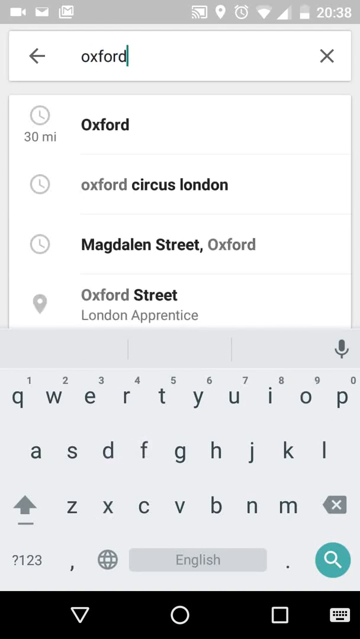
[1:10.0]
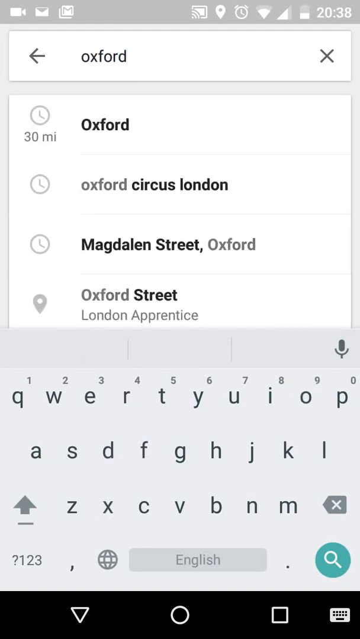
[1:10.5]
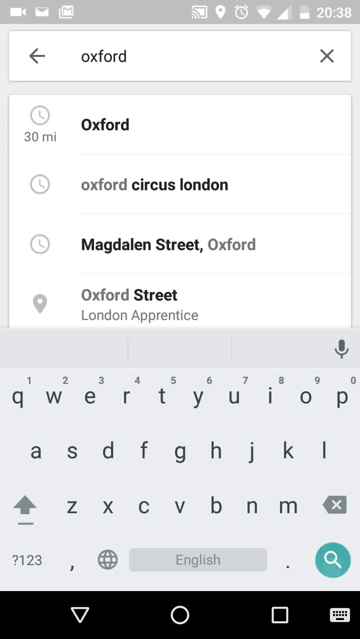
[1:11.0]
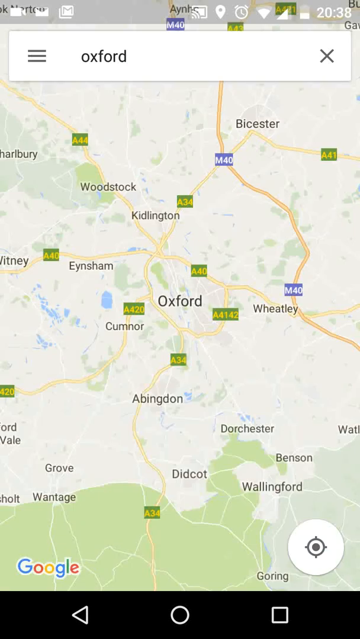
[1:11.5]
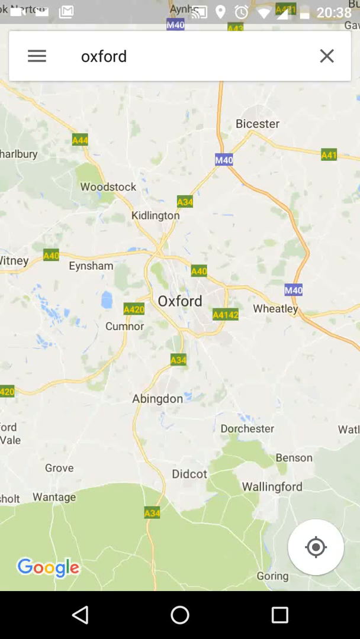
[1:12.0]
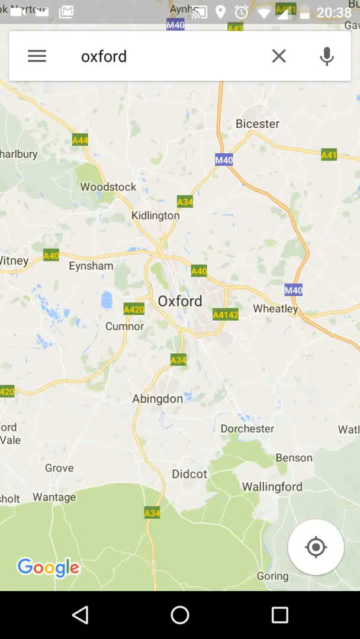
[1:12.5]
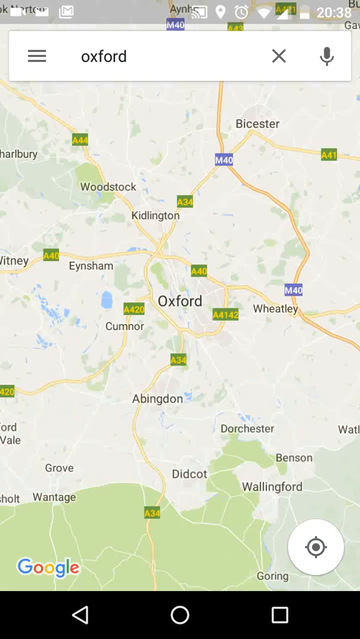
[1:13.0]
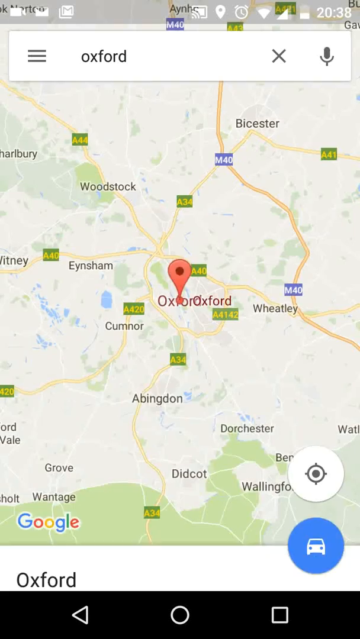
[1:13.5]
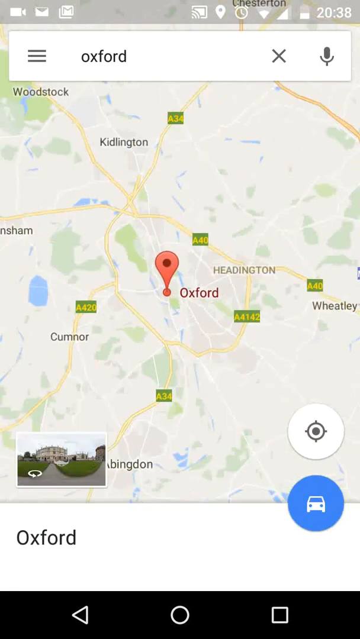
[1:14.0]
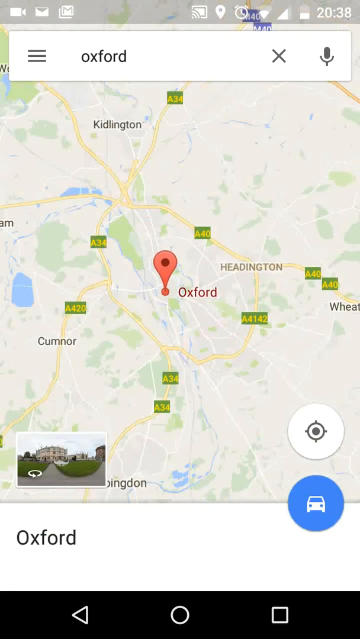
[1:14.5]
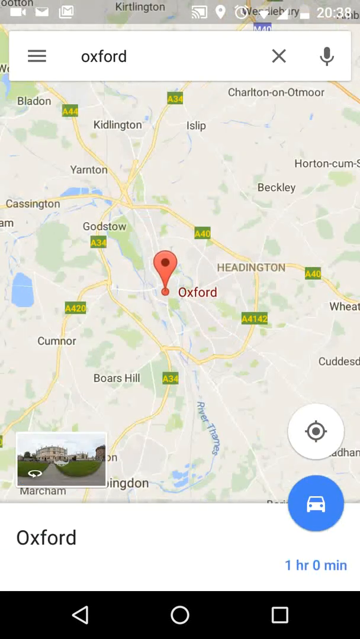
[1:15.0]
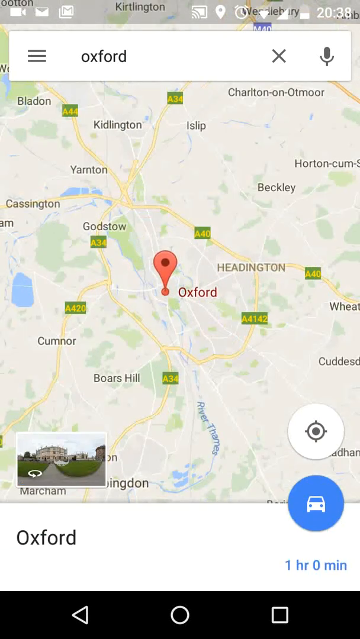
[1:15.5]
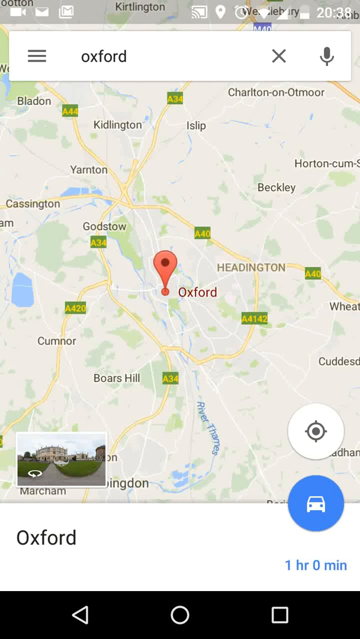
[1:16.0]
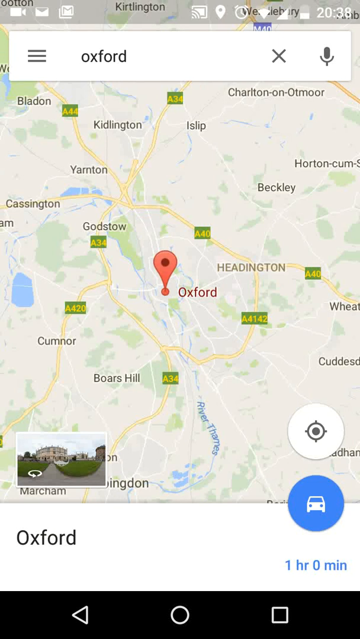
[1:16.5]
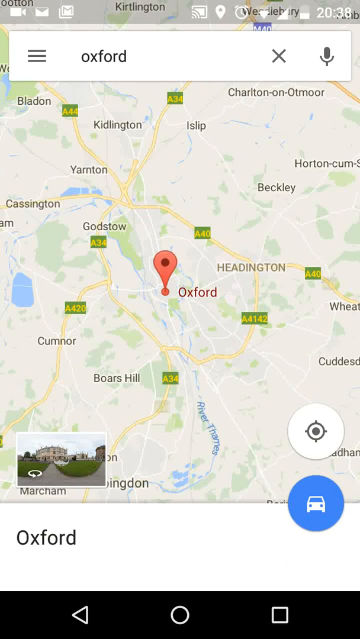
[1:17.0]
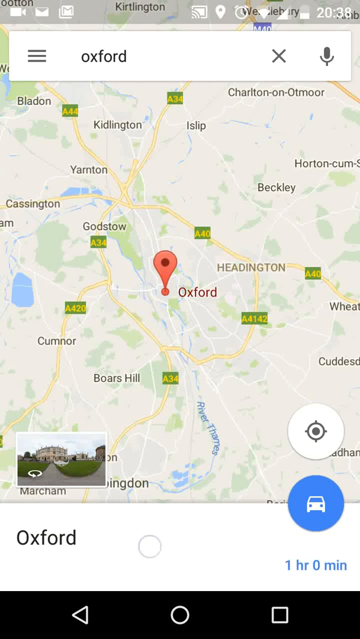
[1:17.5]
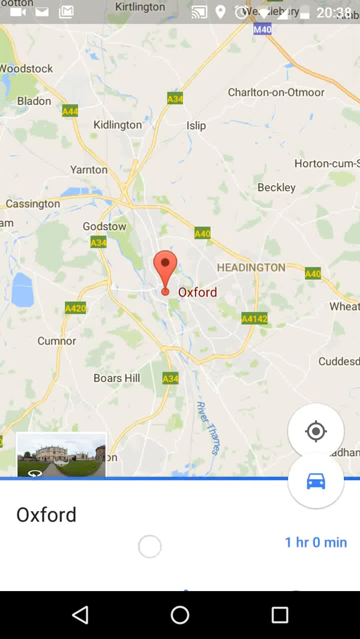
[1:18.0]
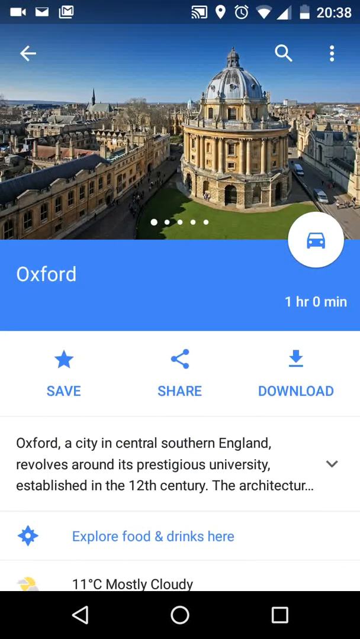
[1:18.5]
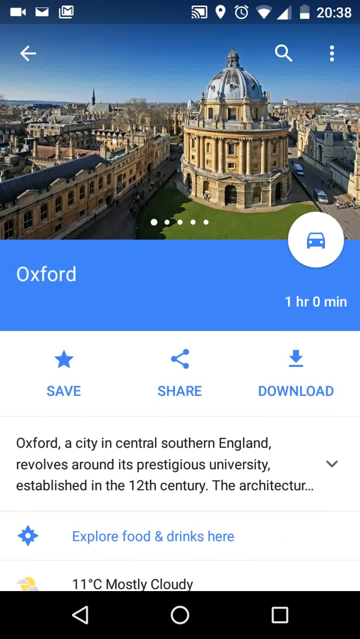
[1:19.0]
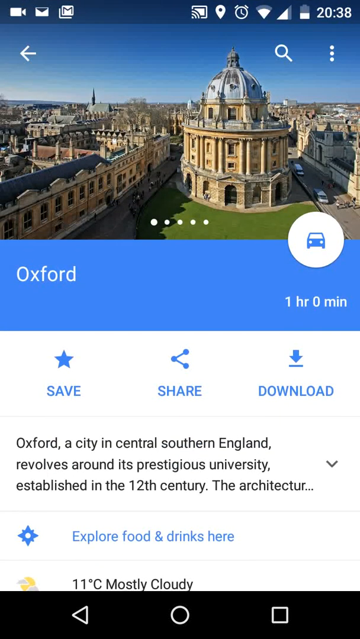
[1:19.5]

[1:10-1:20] He types in Oxford and hits enter, which takes him back to the map. He then taps something, apparently the compass, and the location is pinpointed with a red dot that has a red pin coming out of it, with "Oxford" in red to the right. There is also a picture resembling Google Earth, apparently for a 360-degree view of the area. He taps something and an information panel appears with a picture of what looks like a cathedral, seen from outside with grass around it and streets on both sides. A small car icon shows it is "one hour" away by car. There are a save button with a star, a share button, and a download button with a downward arrow. Below is a short description with a downward arrow for expanding it.